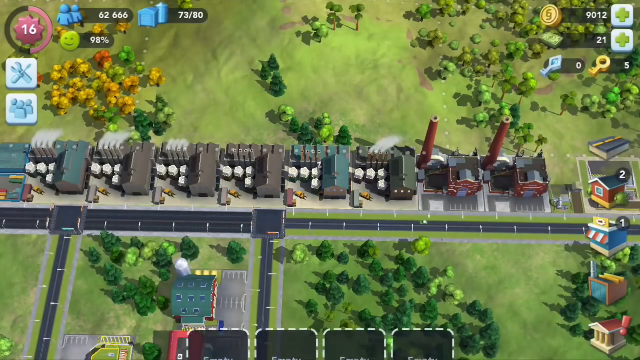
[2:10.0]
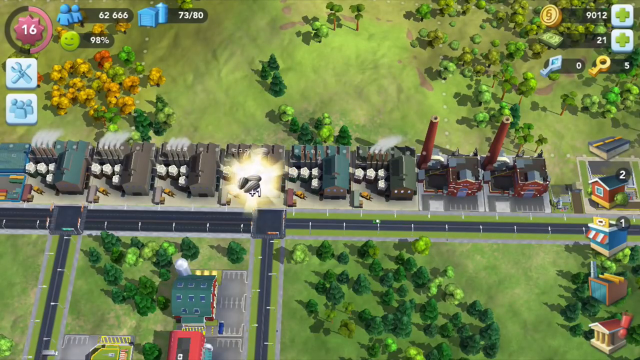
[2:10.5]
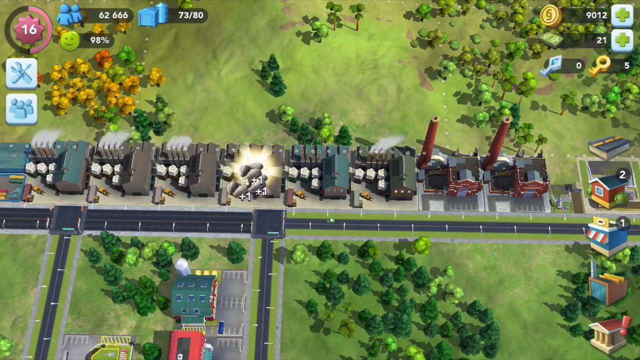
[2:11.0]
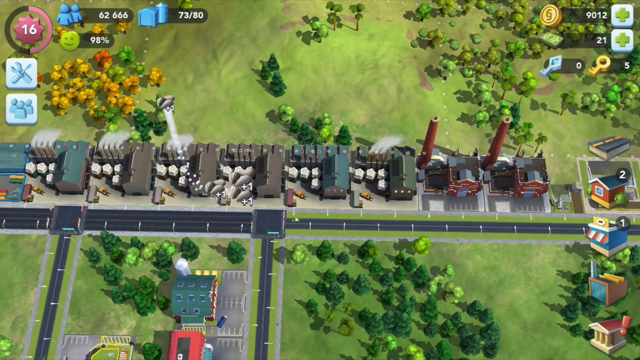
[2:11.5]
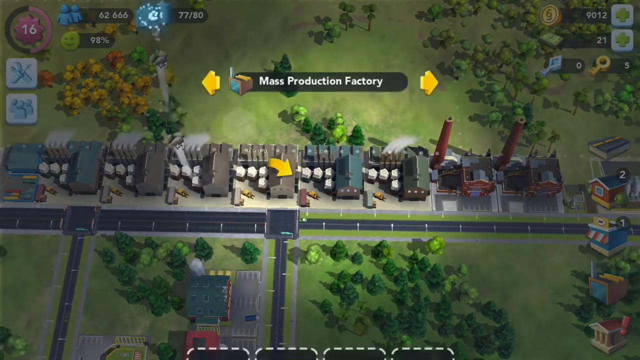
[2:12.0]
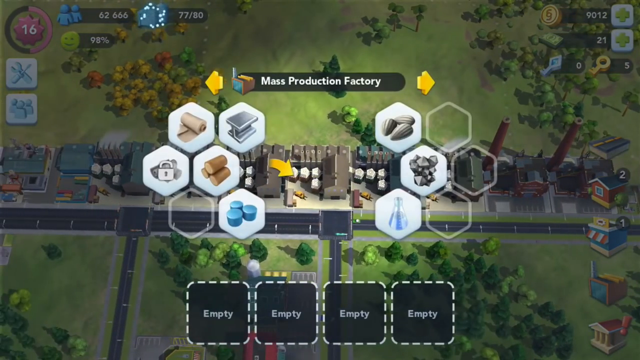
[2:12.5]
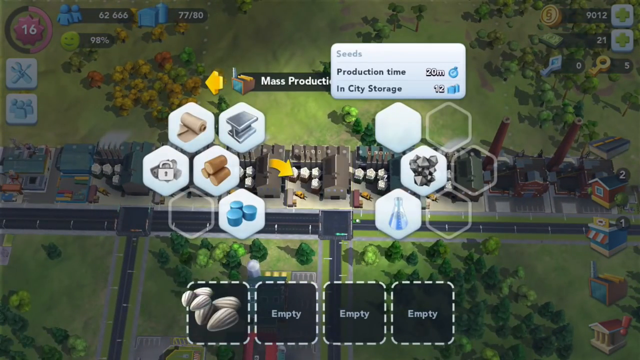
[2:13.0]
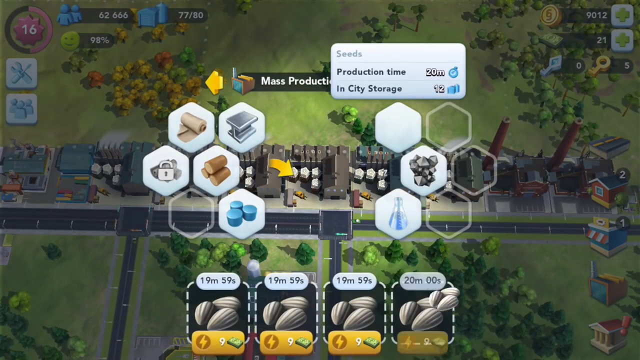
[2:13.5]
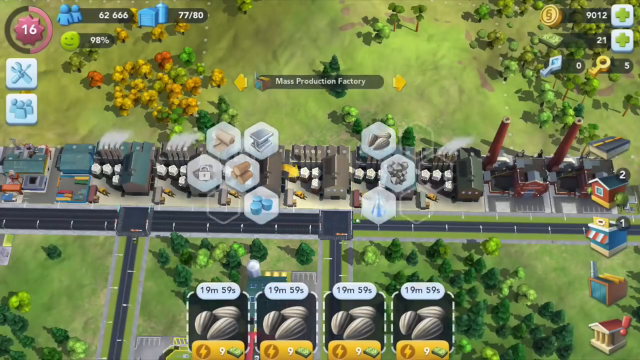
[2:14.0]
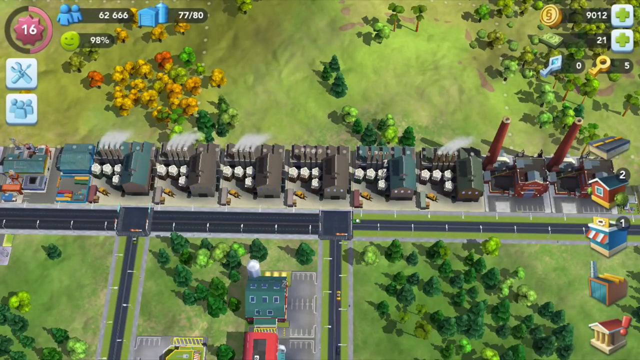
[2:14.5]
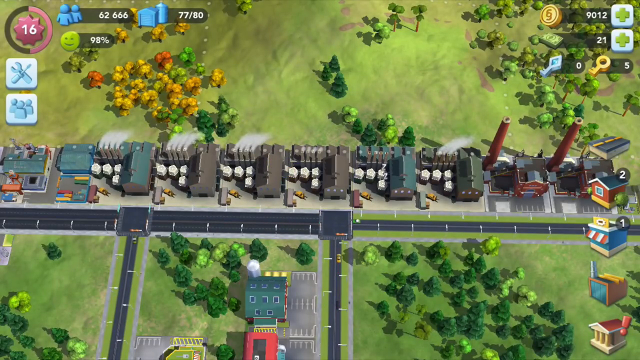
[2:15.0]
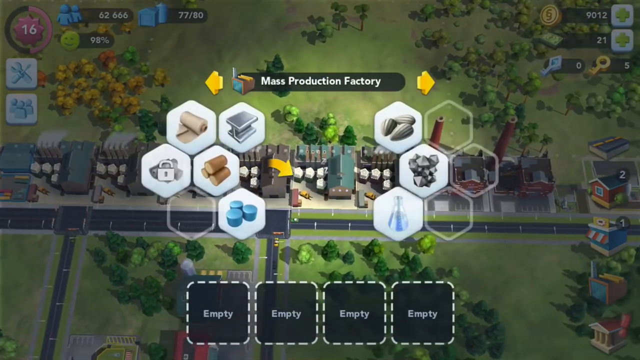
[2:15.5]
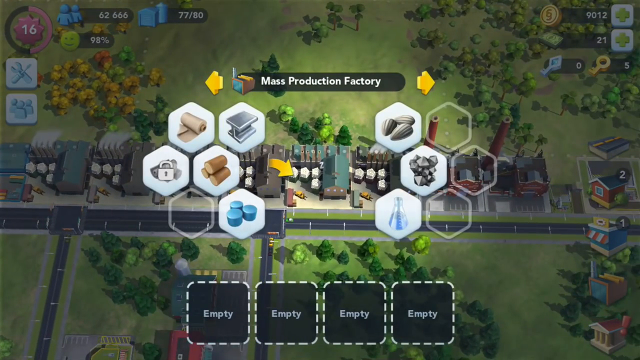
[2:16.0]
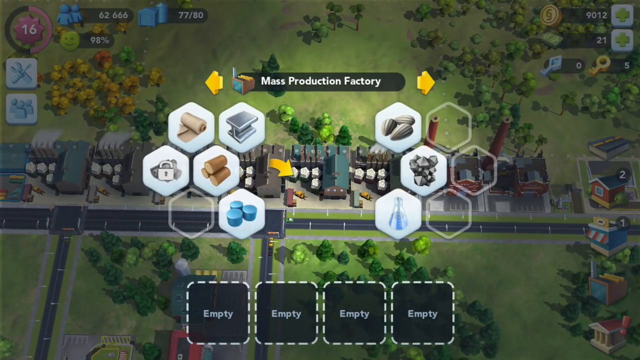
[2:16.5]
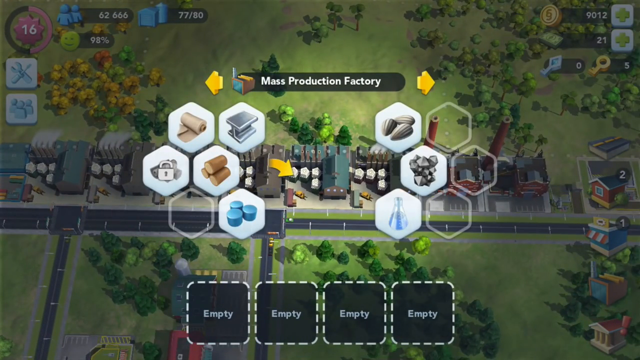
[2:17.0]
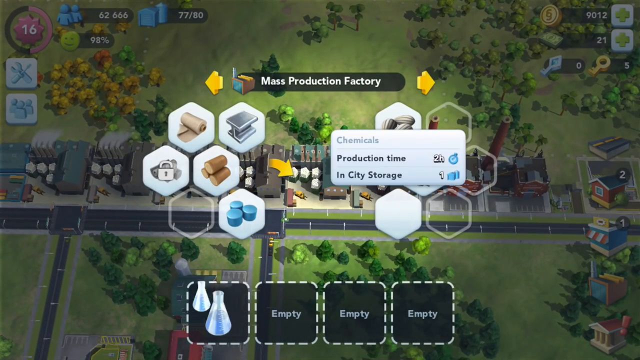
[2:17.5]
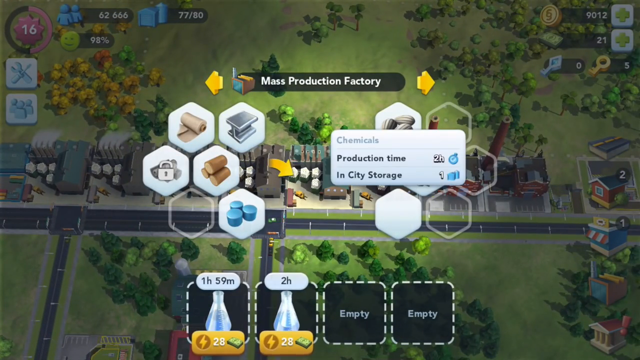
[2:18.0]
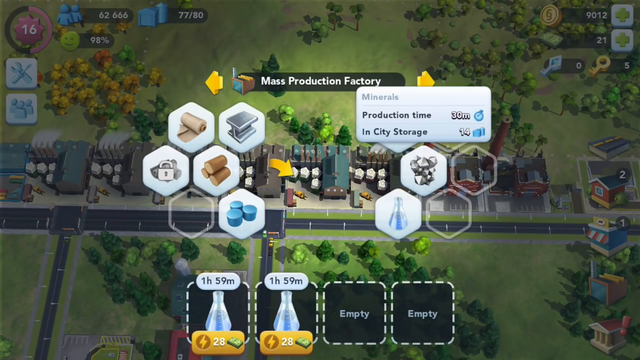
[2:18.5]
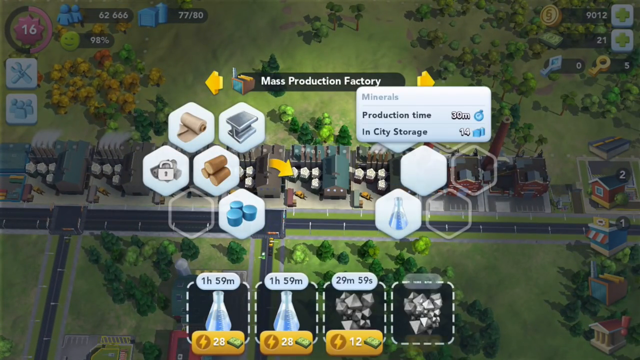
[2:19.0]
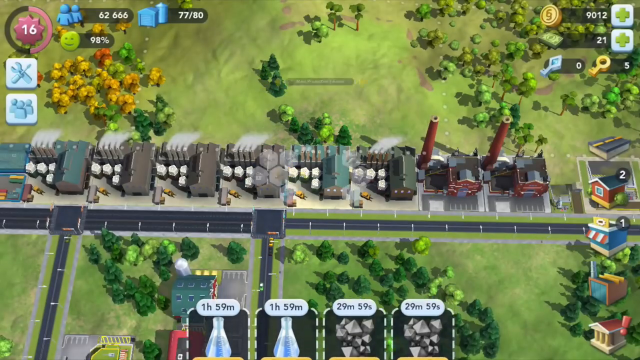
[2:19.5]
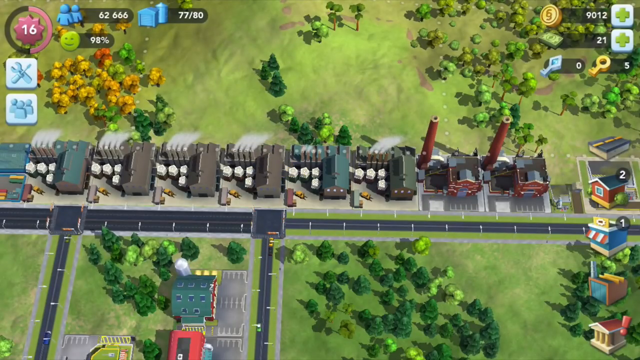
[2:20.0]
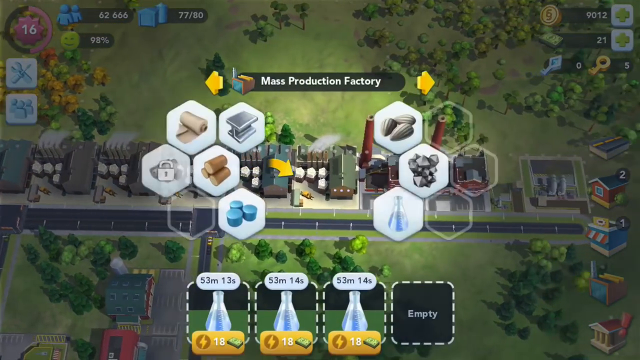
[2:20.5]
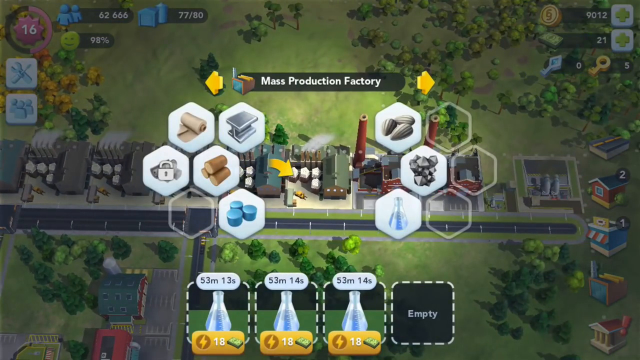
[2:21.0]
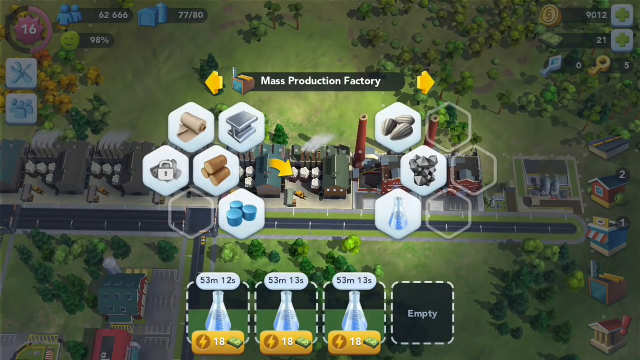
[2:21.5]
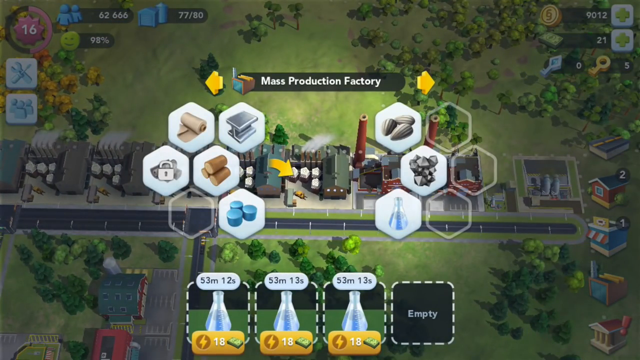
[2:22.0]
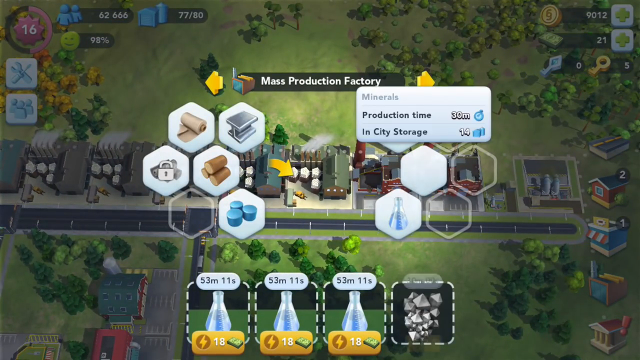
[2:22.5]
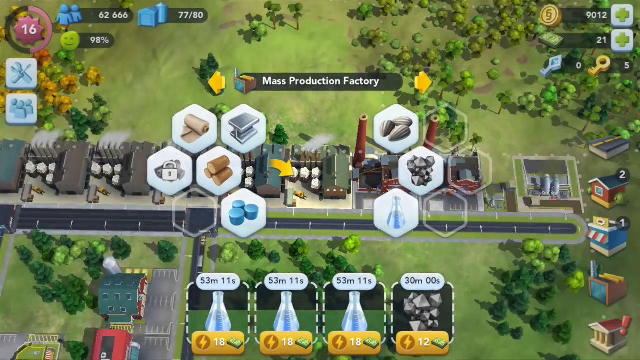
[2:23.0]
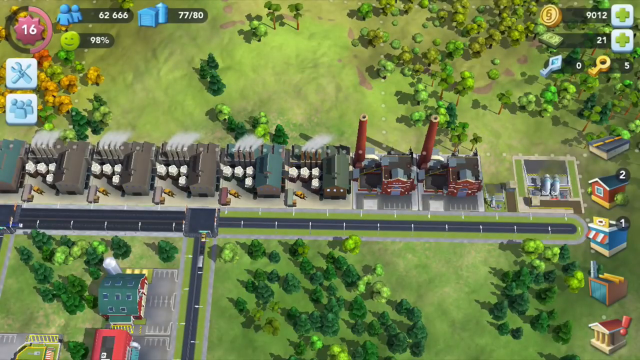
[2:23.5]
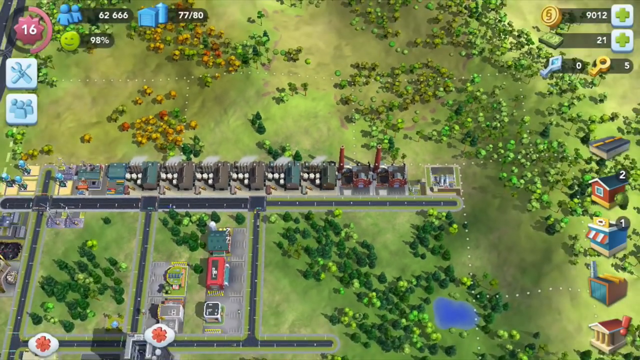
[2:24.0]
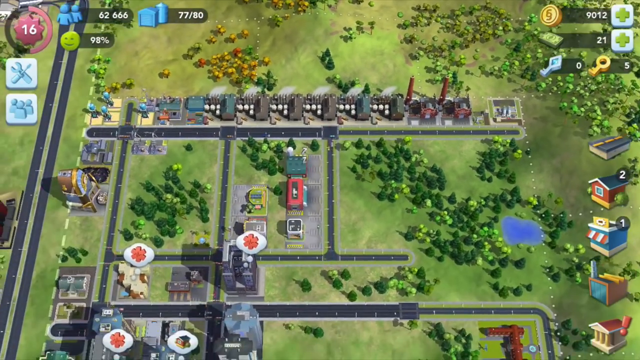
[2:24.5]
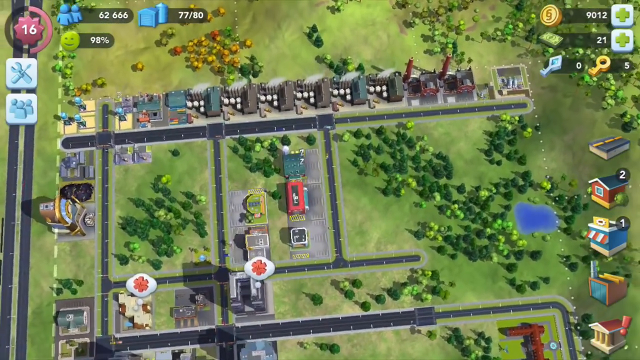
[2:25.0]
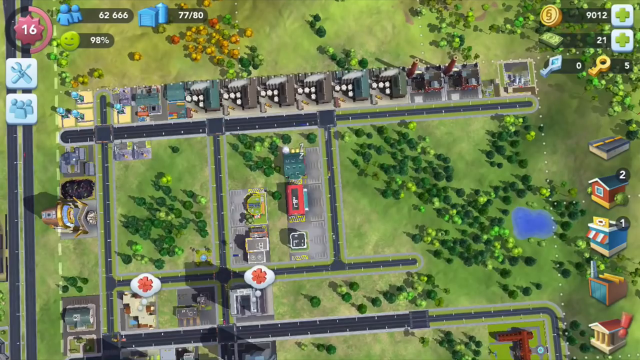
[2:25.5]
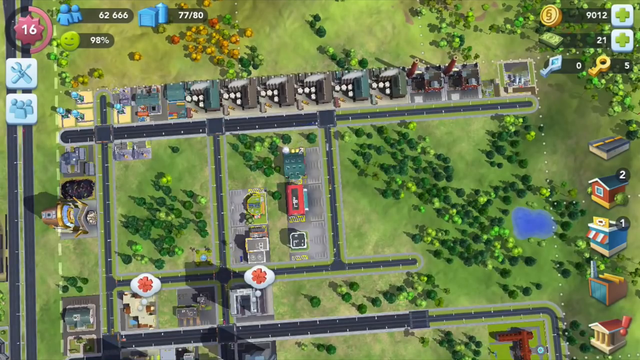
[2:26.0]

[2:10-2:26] The view is over the resources section of the city and goes to the mass production area, where there appear to be hexagon-like slots for items. The window closes, then is opened and highlighted again. Some selections are made, and the time for each one is laid out at the bottom of the screen, labeled production time. A time above starts at 53 minutes and 11 seconds, apparently for plastic items. The view then pans over the city, where small vehicles, about two, move down a road, highlighted here and there as they move about. When the screen is selected, it changes to a gray color until it is unhighlighted.